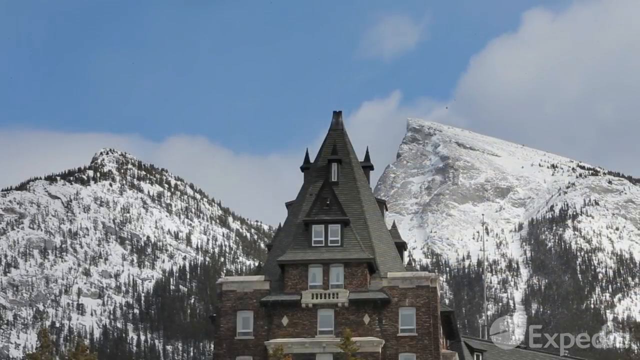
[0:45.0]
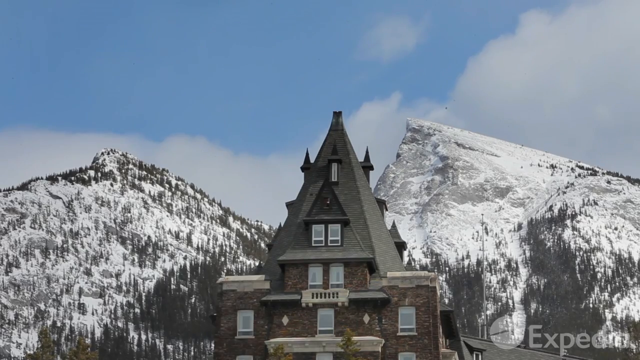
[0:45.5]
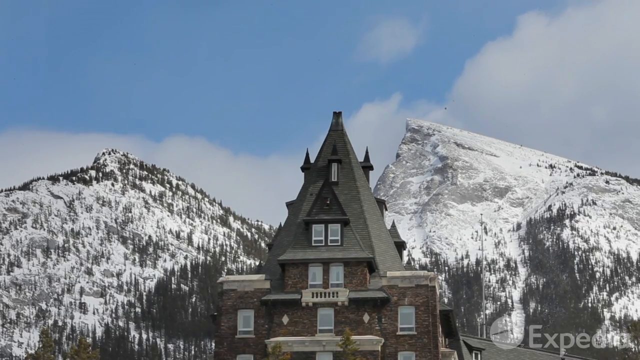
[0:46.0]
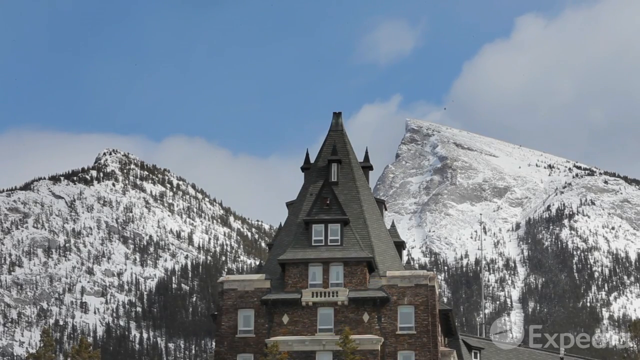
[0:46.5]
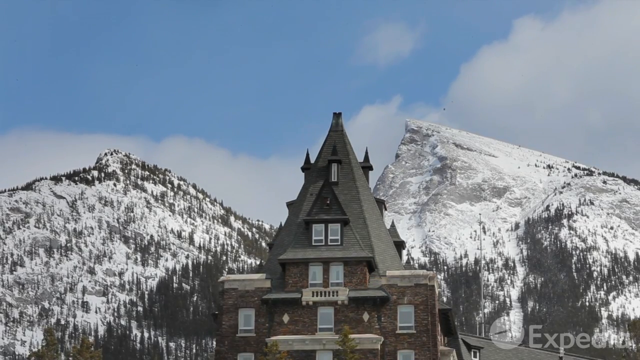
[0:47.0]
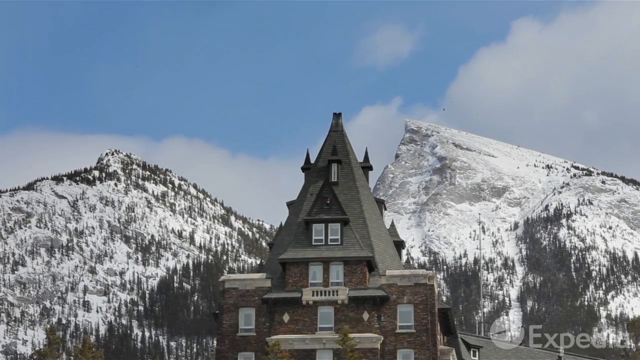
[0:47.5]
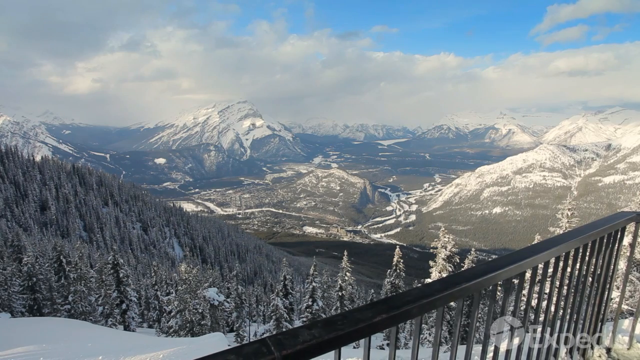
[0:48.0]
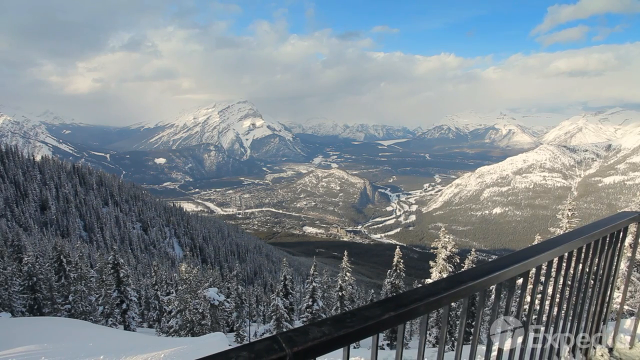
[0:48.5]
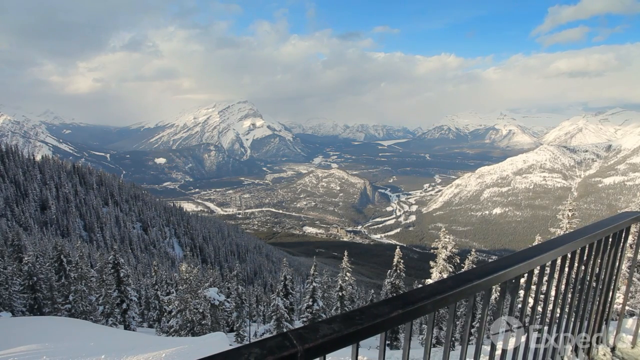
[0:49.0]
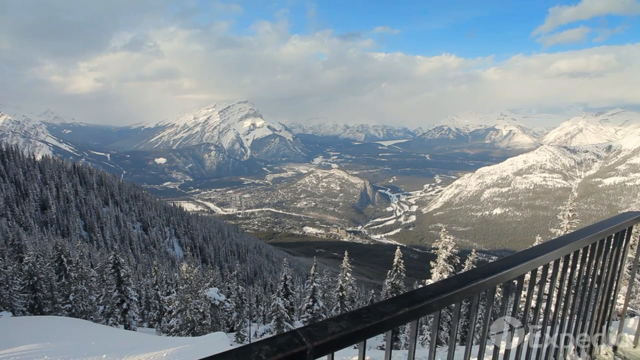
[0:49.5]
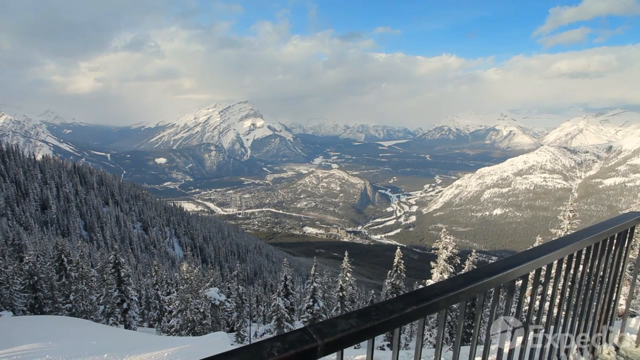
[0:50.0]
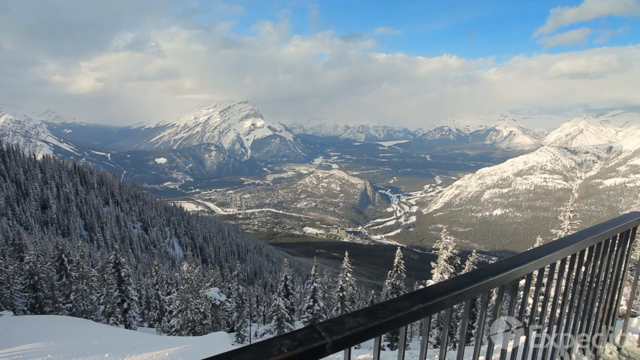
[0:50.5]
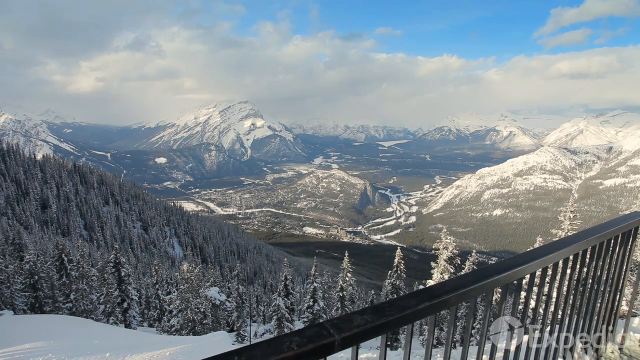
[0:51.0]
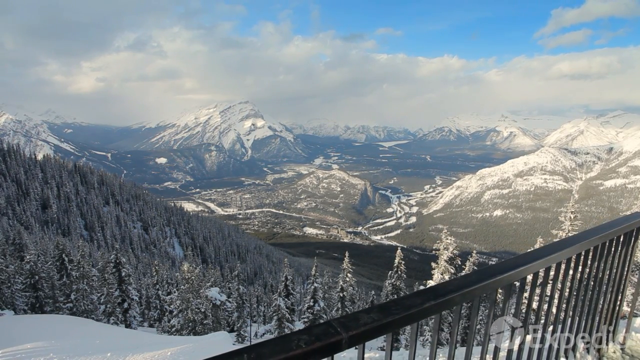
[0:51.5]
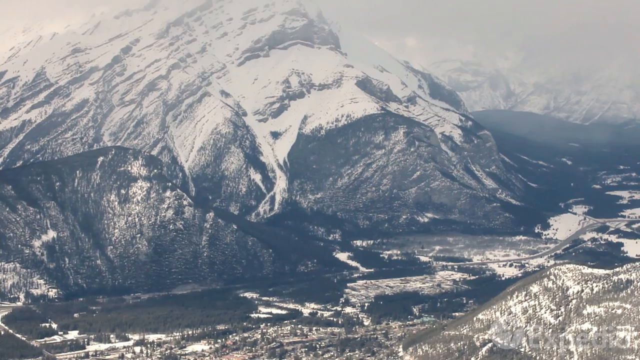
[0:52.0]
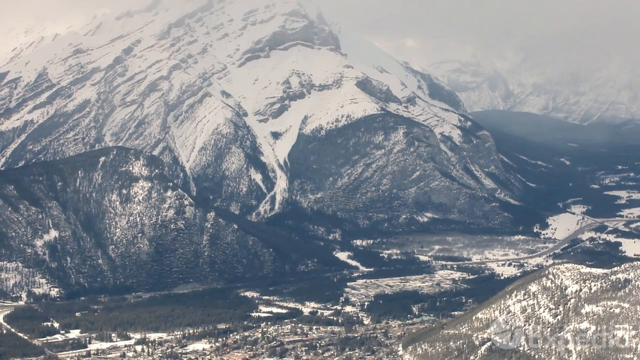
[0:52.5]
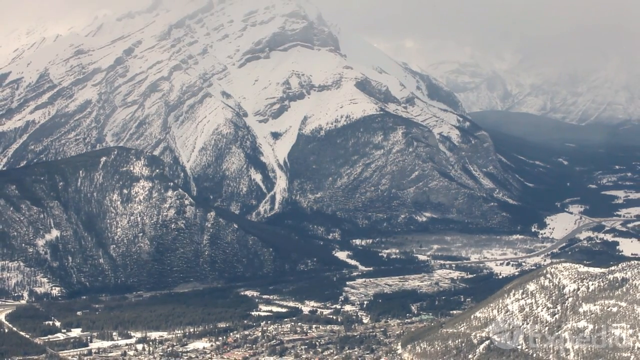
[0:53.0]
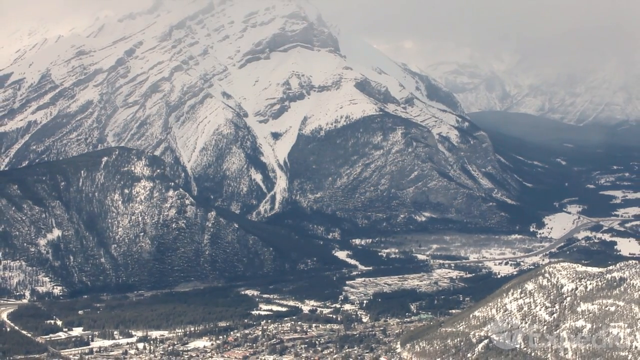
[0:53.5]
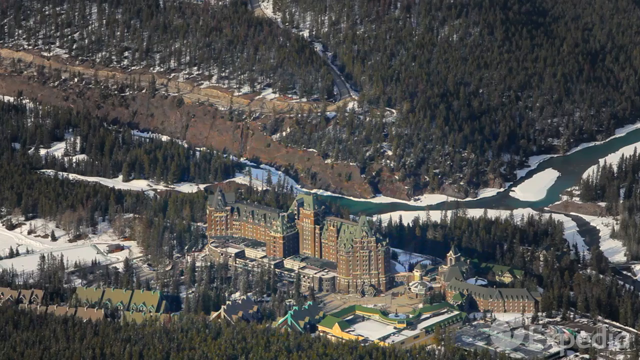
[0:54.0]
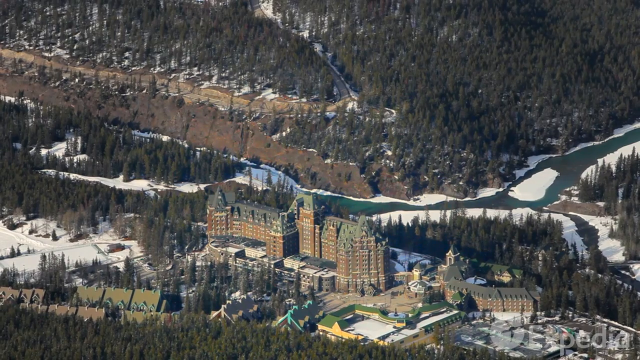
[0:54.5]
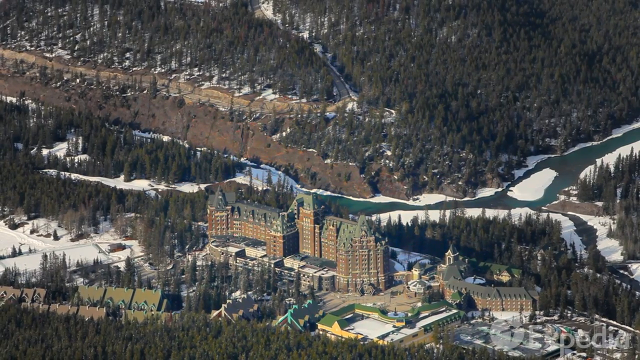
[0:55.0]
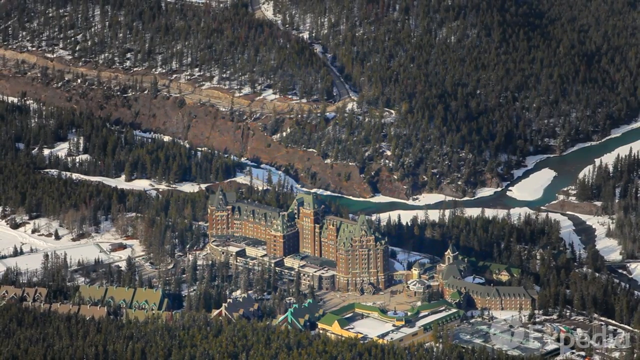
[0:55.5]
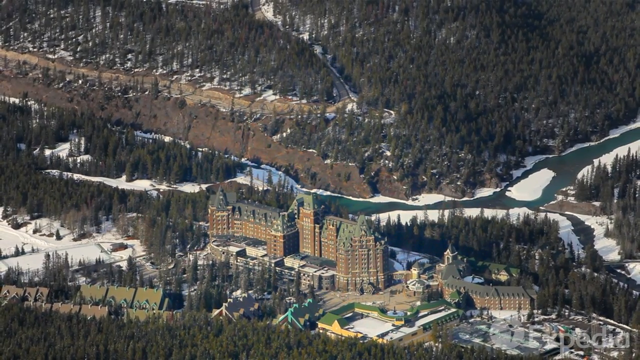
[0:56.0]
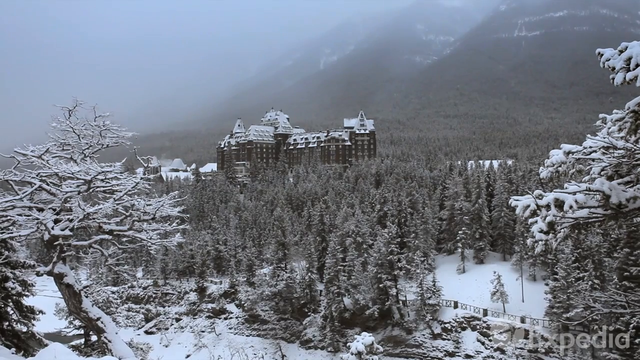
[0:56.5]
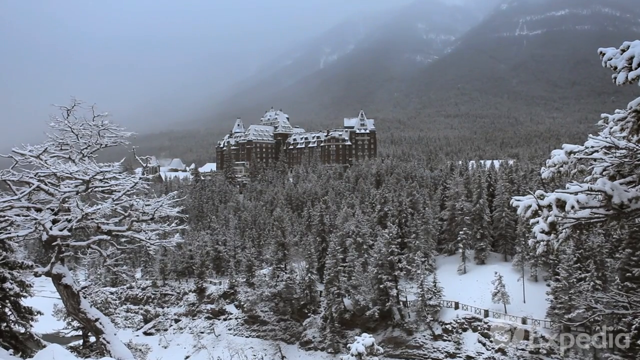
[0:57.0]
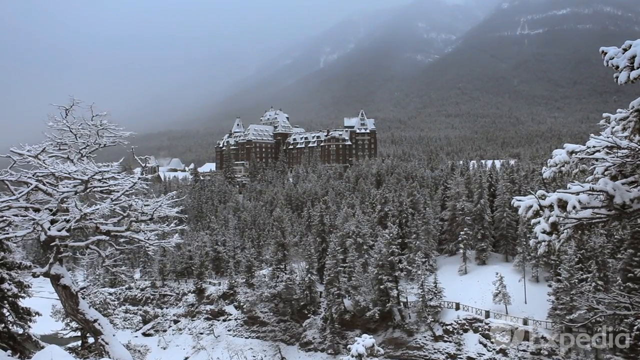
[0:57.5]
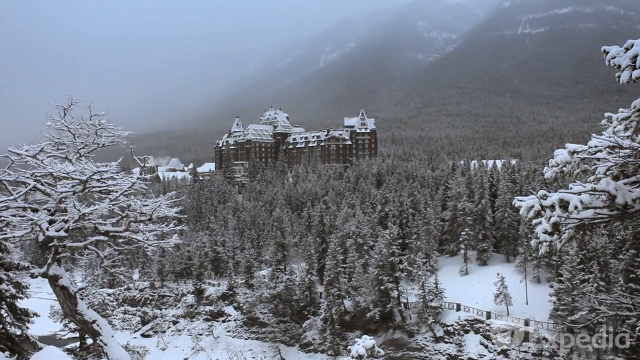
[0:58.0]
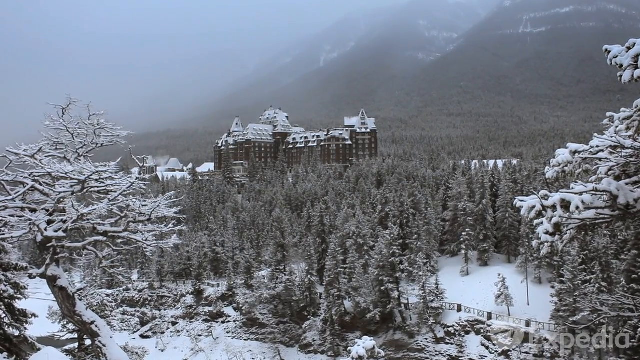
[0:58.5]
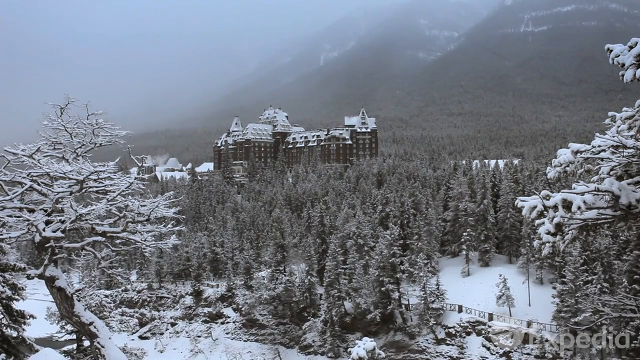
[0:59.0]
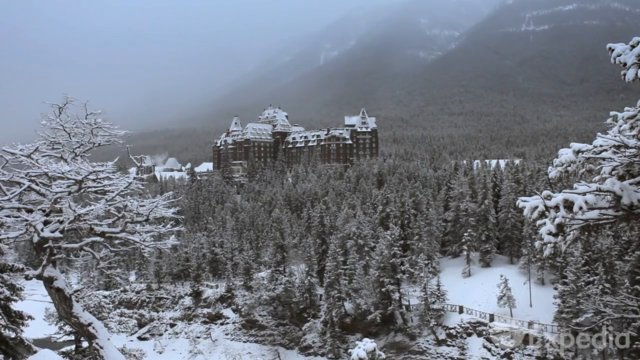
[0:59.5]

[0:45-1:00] The scene shows the top of one of the buildings, with blue skies and clouds in the background and mountains covered with snow and trees. The view pans out a little, and then it is high up in the mountains, with a black fence in the foreground and many mountains and snow-covered trees in the background. The next shot shows another mountain covered with snow, with a lot of trees all around the area. Then the building is shot from far away, surrounded by more trees, snow-covered areas and some water. In the next shot, the building is covered in snow; the area is covered in fresh snow and it is a bit foggy. The view starts to zoom in a little toward the building.